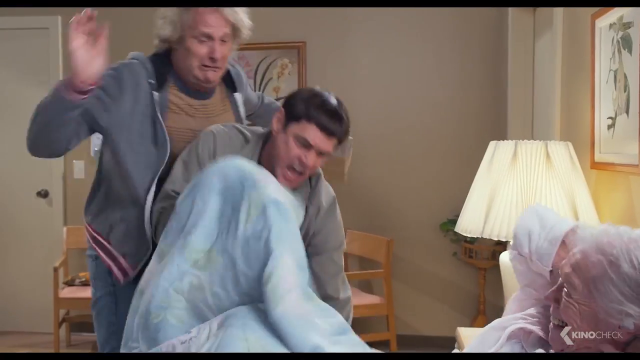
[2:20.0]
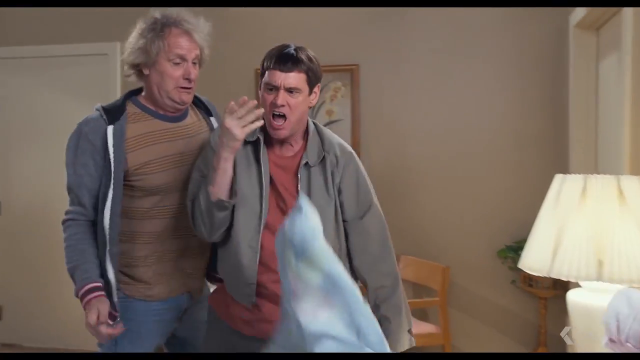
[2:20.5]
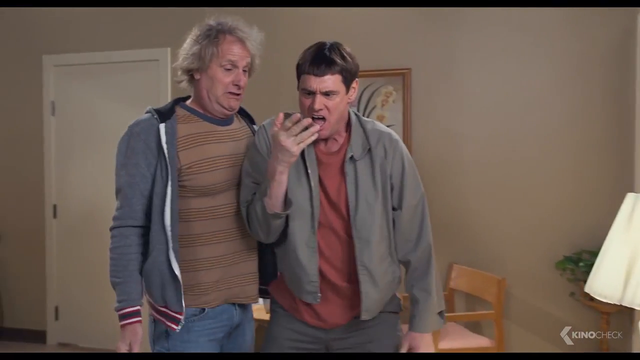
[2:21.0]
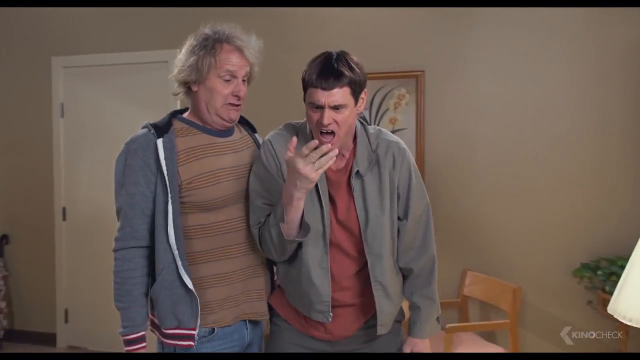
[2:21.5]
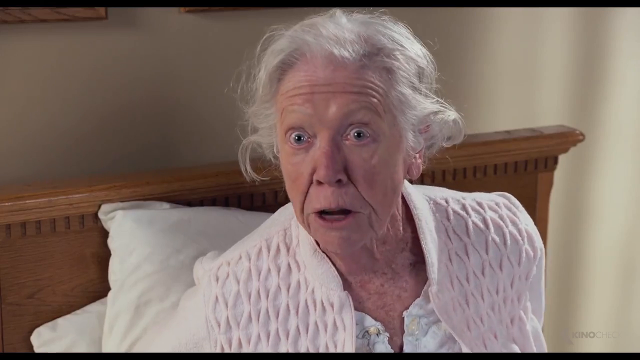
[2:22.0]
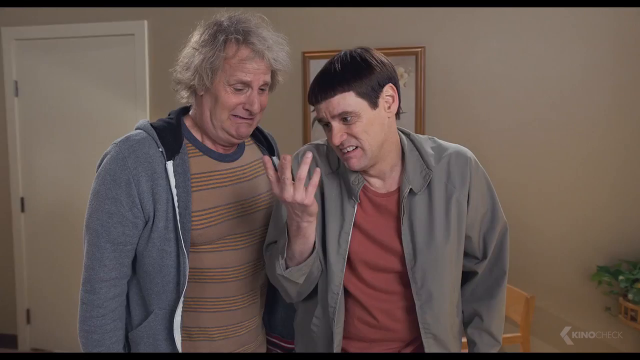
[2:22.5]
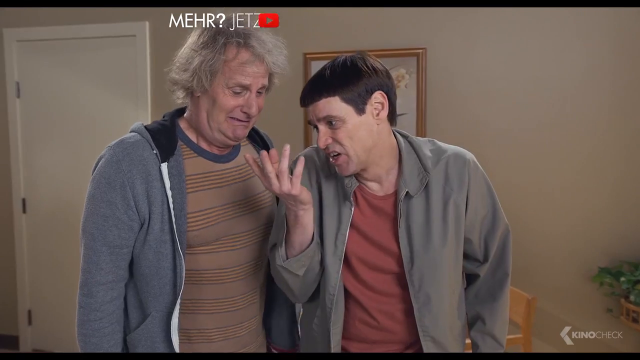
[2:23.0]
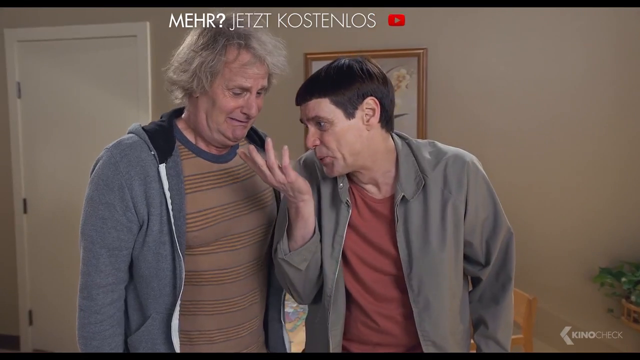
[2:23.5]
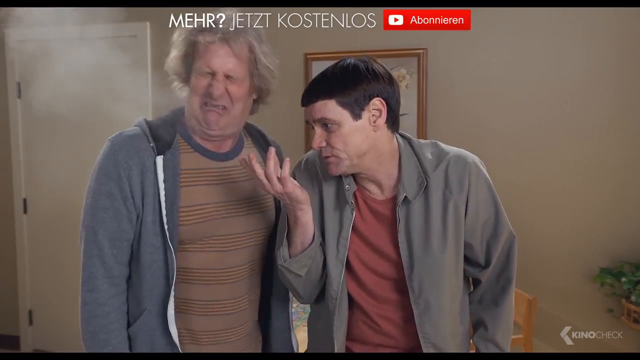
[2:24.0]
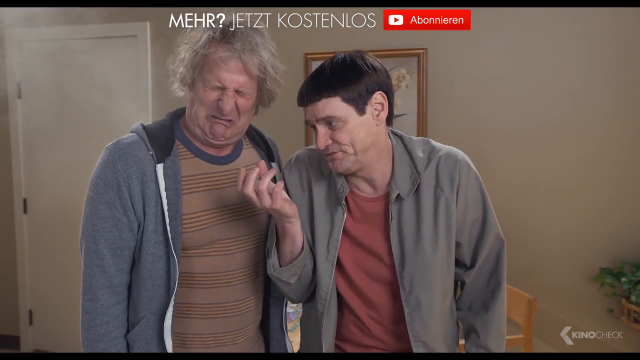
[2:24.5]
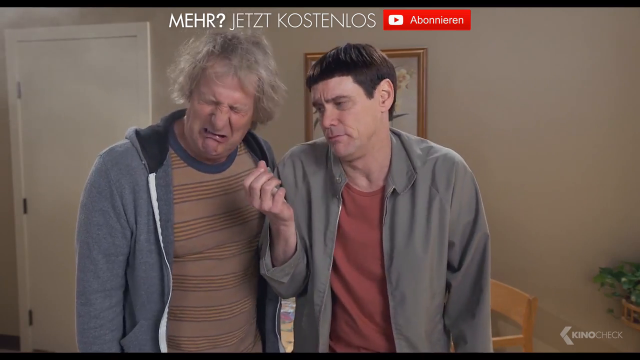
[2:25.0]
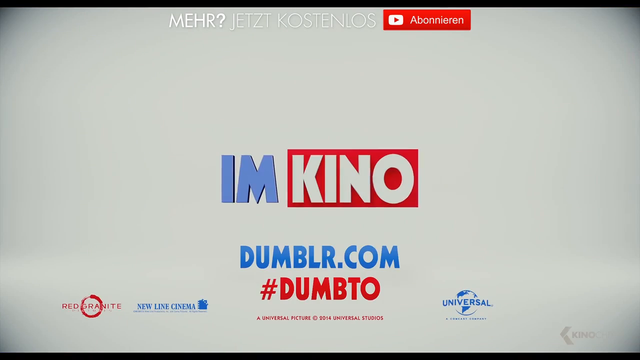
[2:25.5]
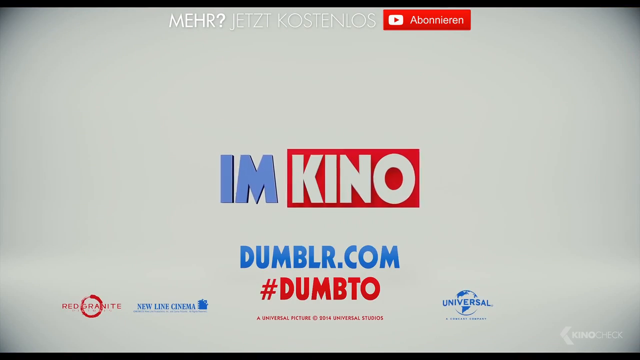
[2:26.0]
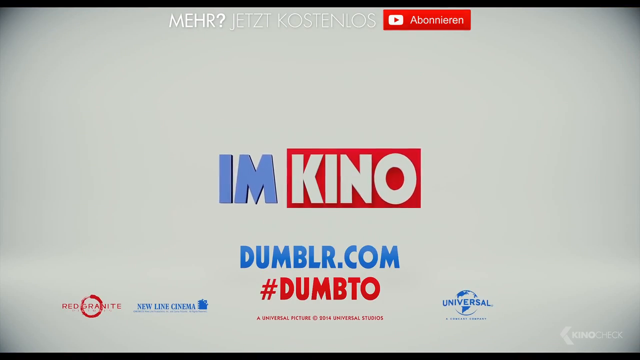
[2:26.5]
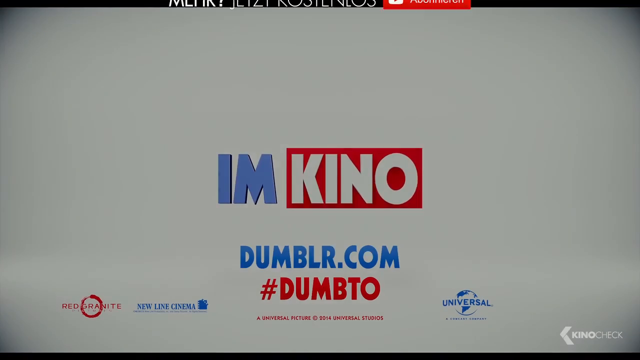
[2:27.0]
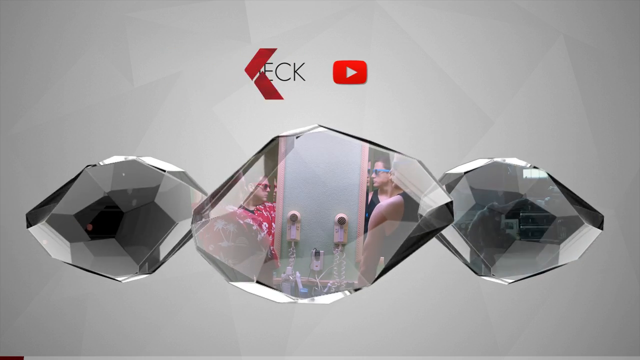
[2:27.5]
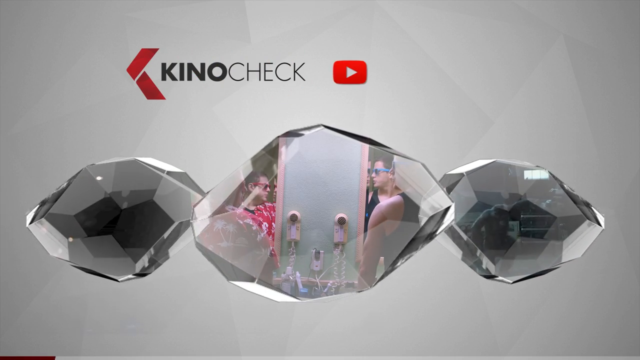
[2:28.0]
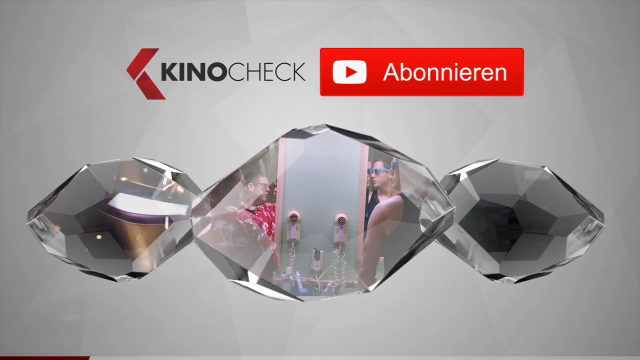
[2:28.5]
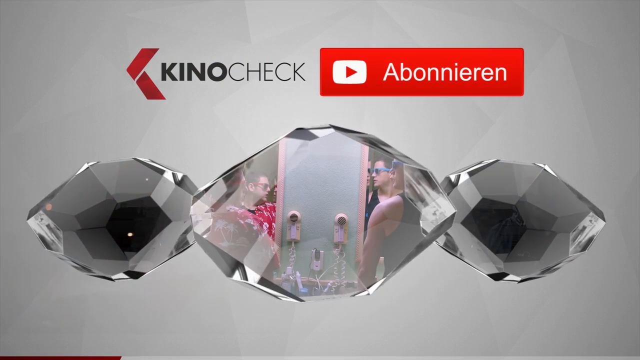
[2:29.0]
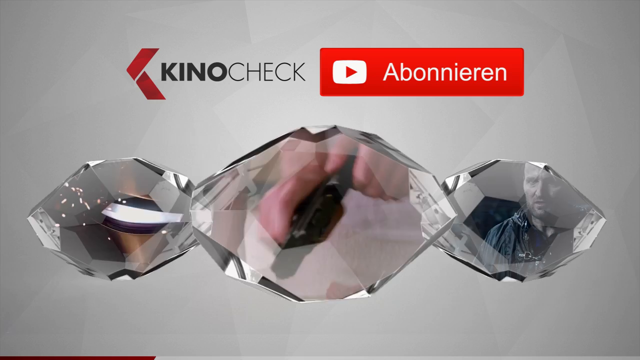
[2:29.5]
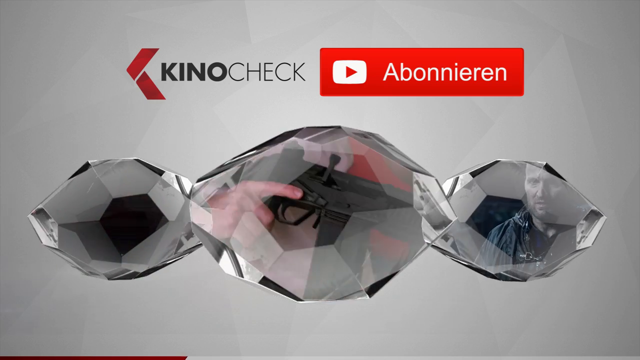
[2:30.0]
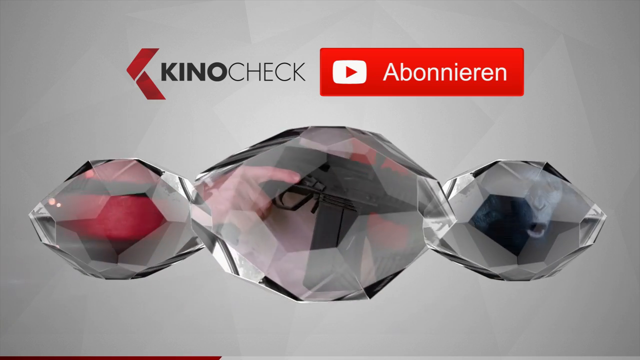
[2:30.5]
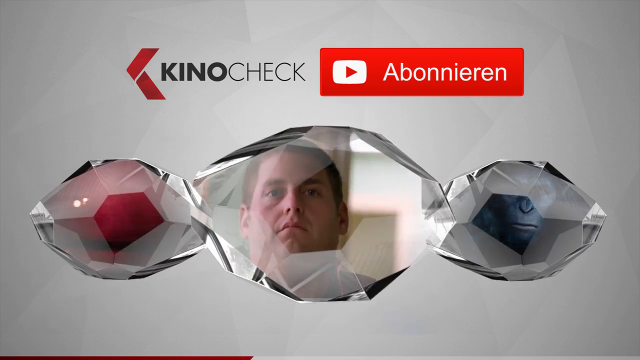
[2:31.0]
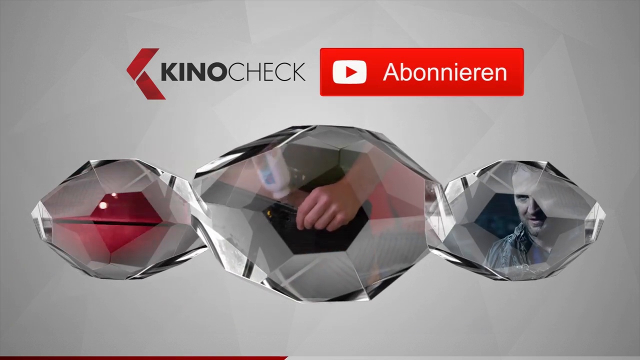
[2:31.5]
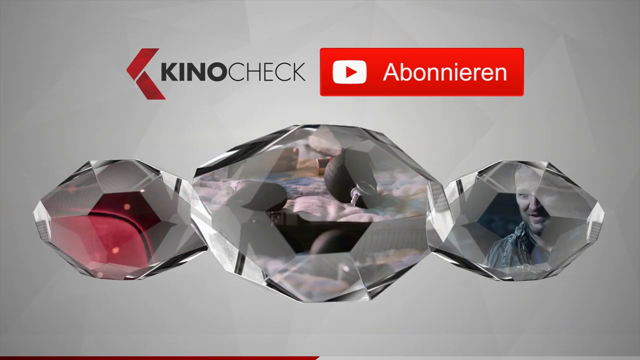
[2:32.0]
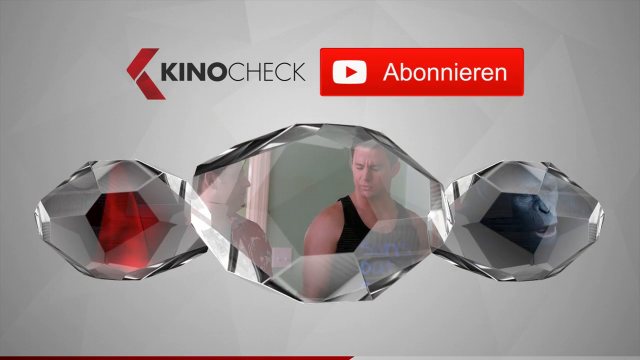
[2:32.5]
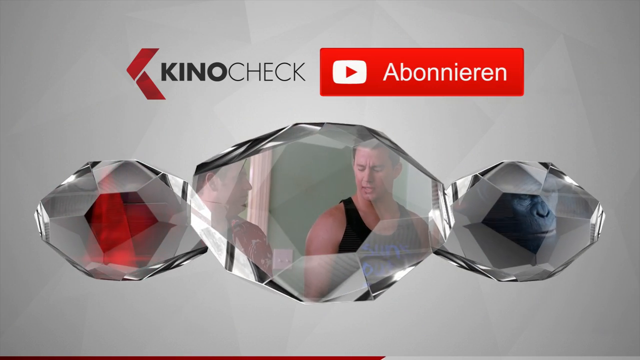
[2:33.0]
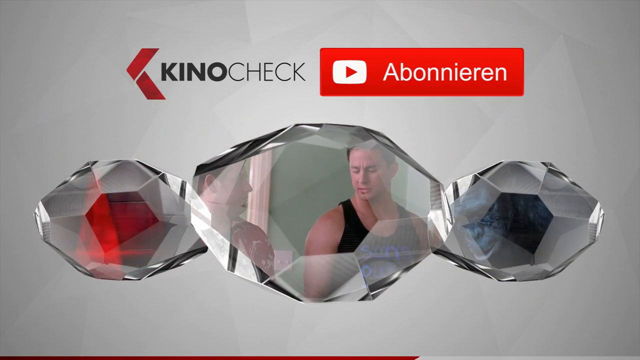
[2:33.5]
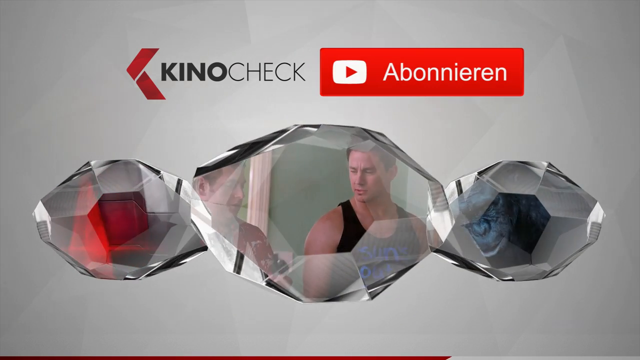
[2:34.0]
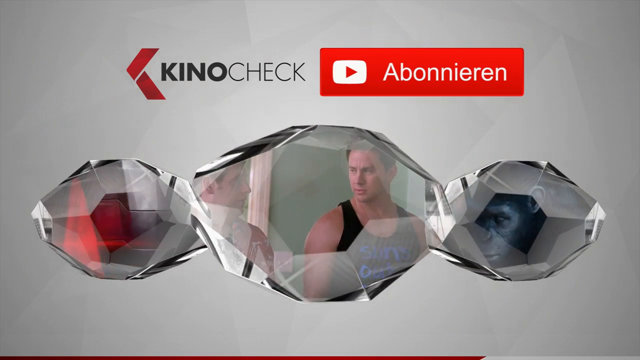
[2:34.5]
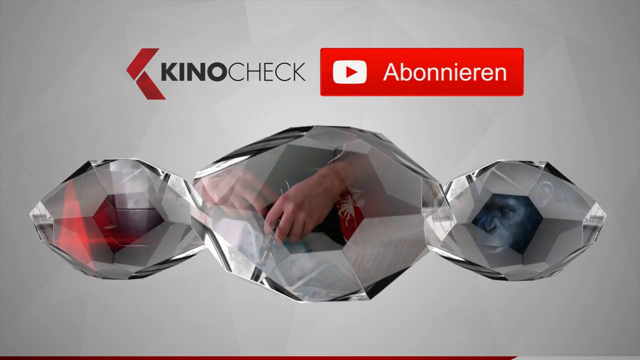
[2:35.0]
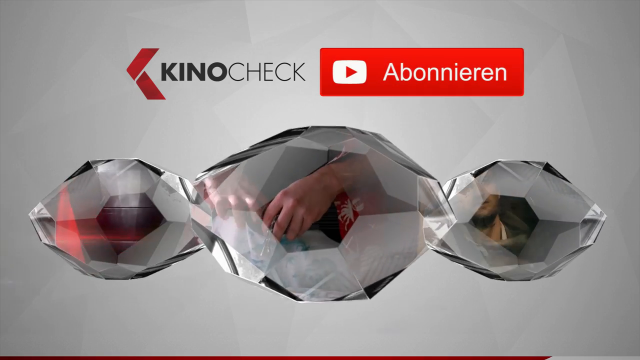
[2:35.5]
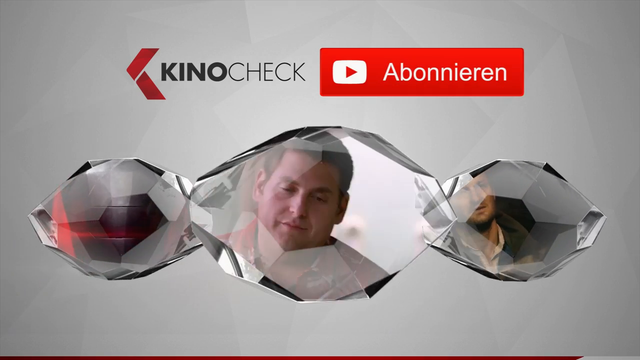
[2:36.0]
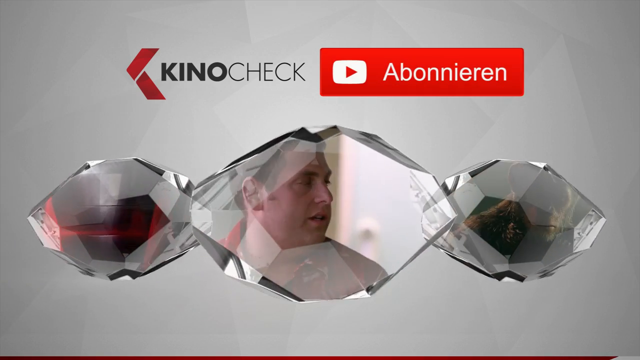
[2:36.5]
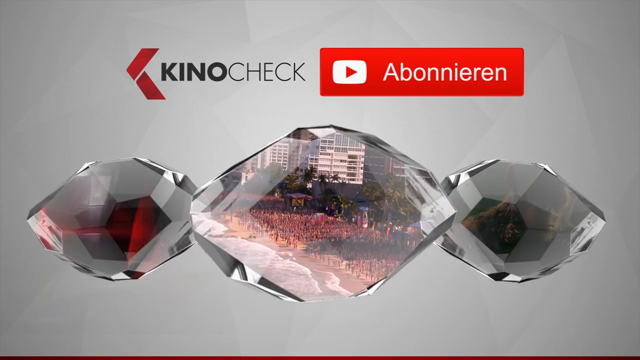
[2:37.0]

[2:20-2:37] An advertisement for the movie says "I am Kino", with "I am" in blue and "Kino" in white on a red background. At the very bottom it says "Dumblr.com" and "#dumbto", and there seems to be some German text at the top. The video then returns to Kinocheck, and there is also a YouTube channel link reading "abonnieren".